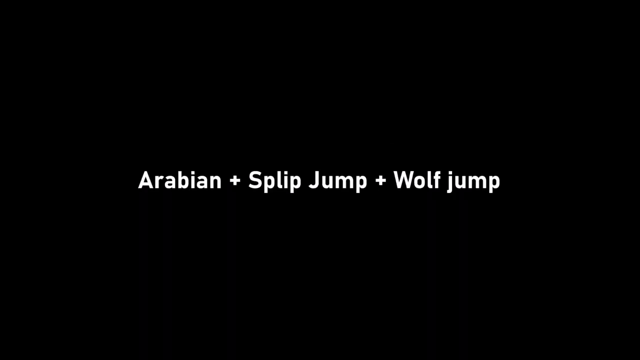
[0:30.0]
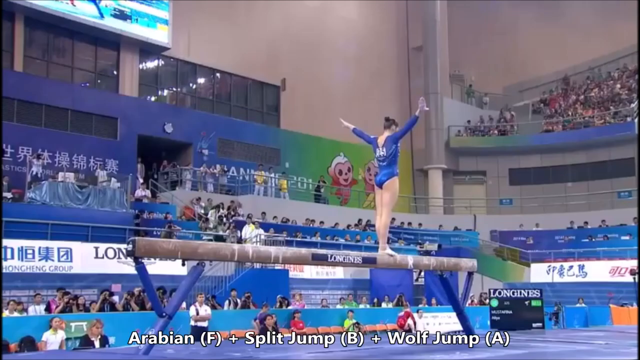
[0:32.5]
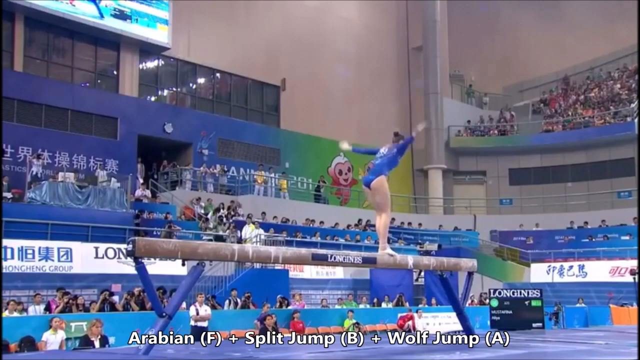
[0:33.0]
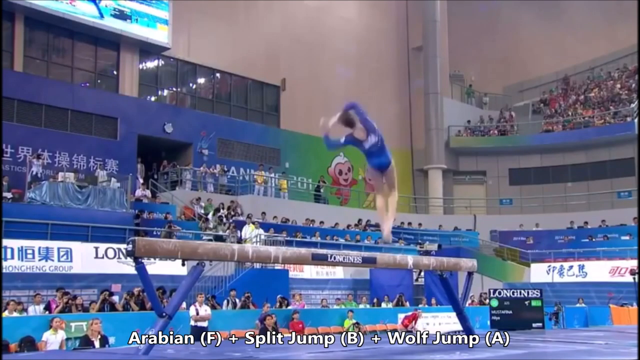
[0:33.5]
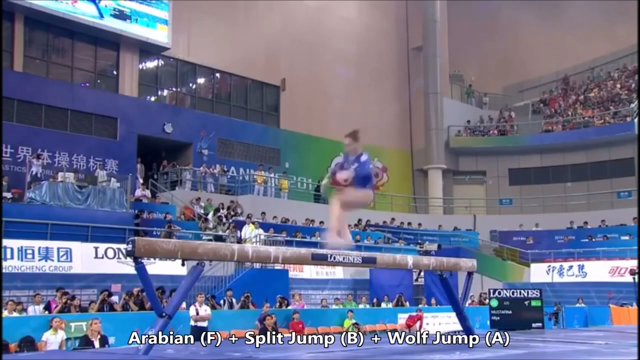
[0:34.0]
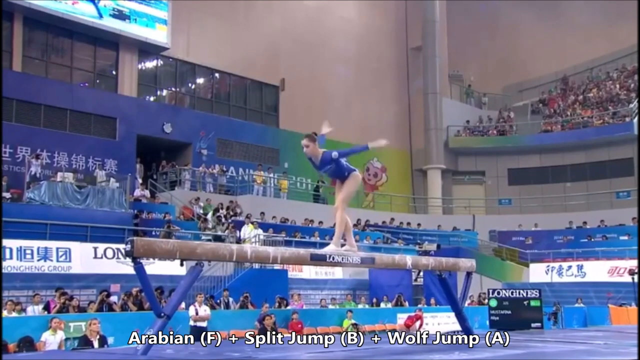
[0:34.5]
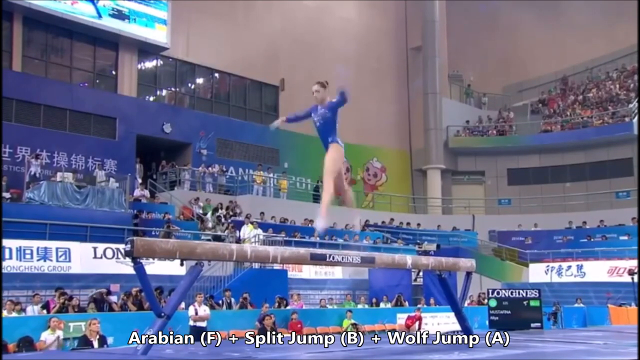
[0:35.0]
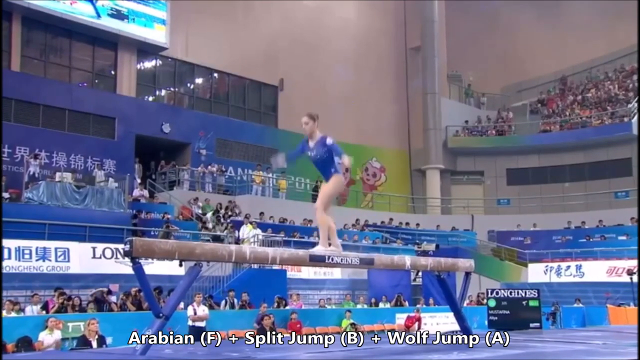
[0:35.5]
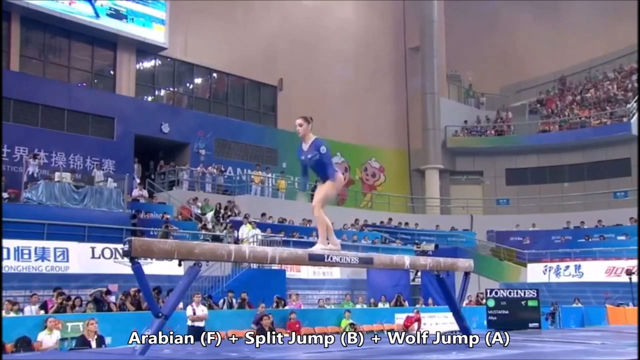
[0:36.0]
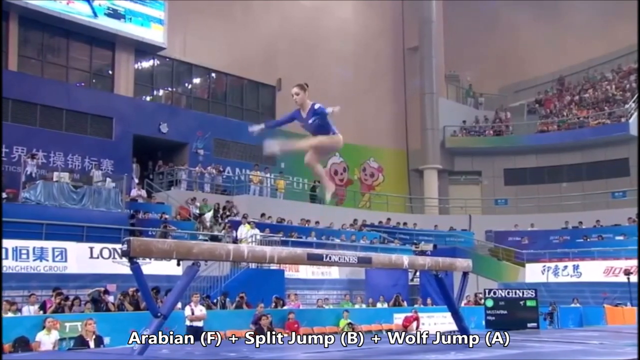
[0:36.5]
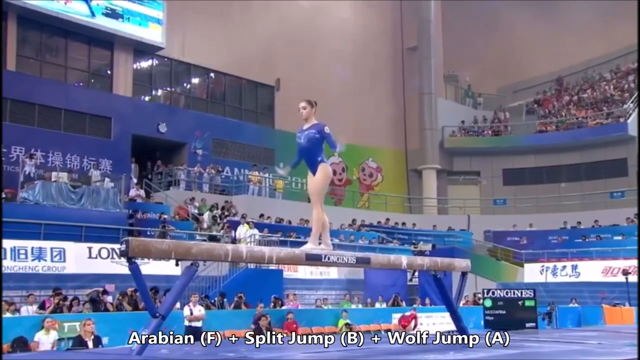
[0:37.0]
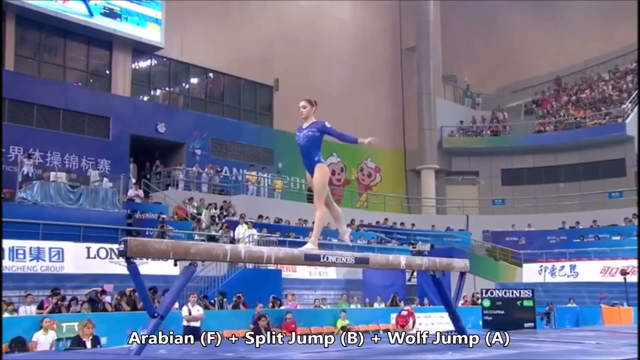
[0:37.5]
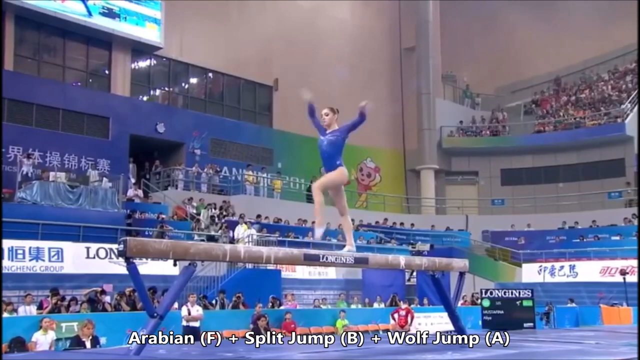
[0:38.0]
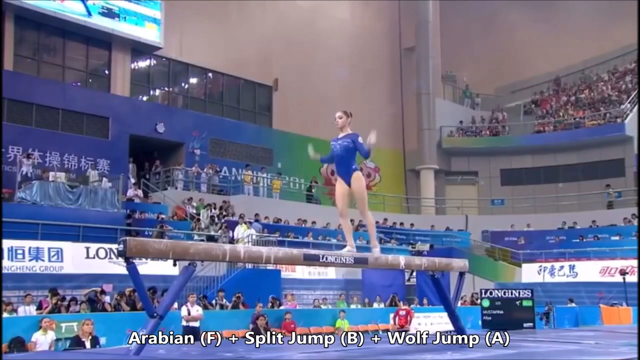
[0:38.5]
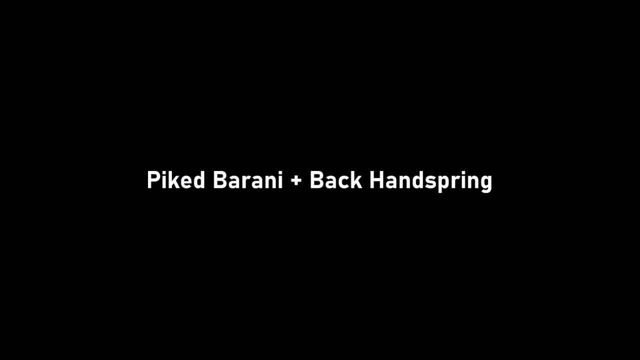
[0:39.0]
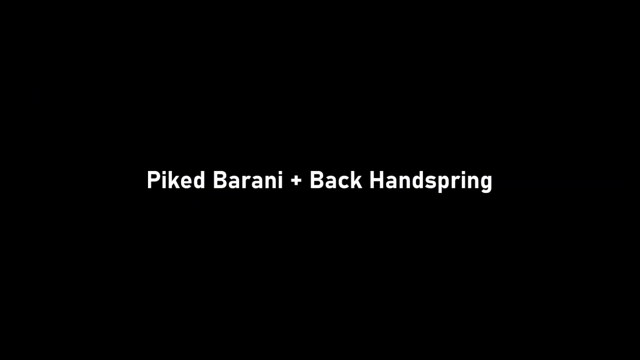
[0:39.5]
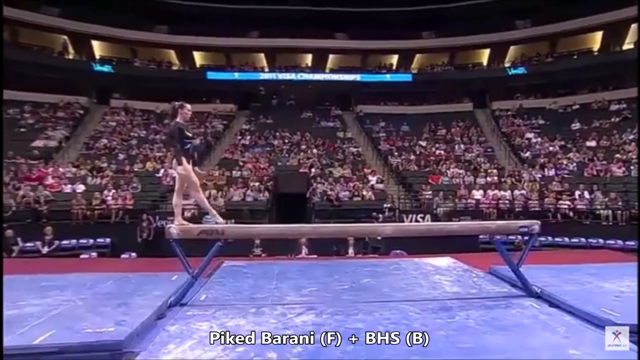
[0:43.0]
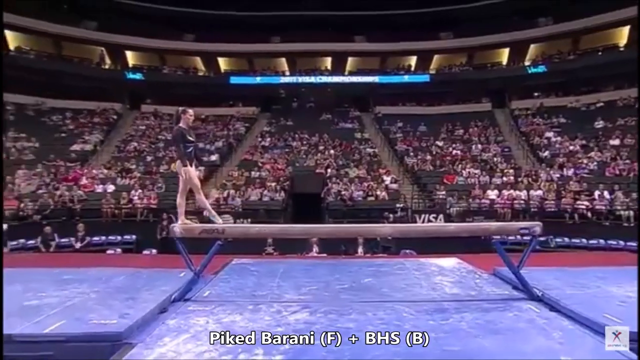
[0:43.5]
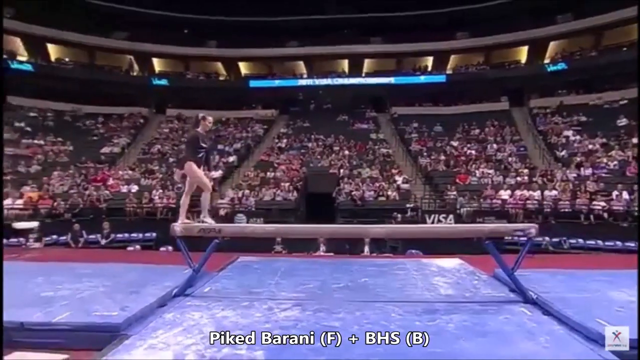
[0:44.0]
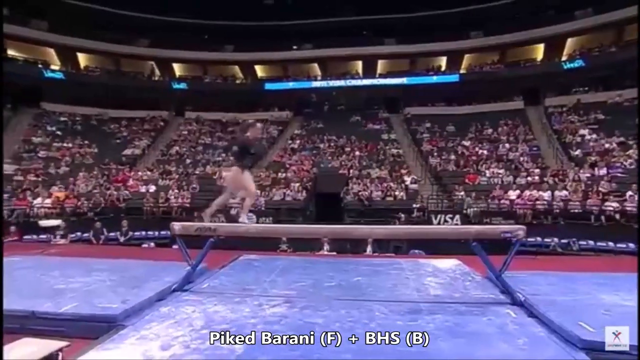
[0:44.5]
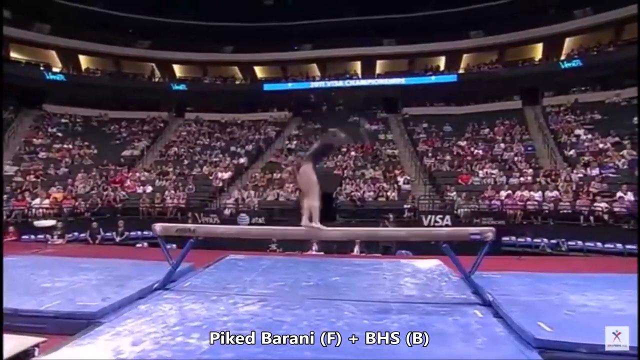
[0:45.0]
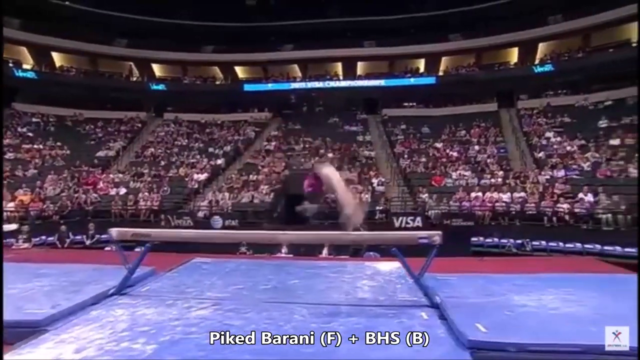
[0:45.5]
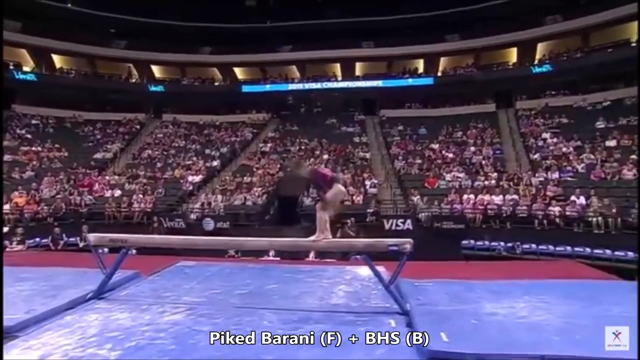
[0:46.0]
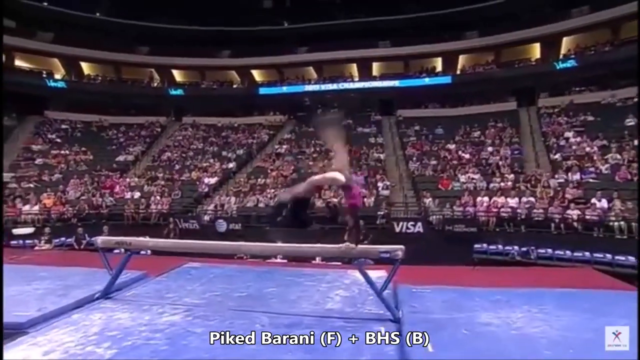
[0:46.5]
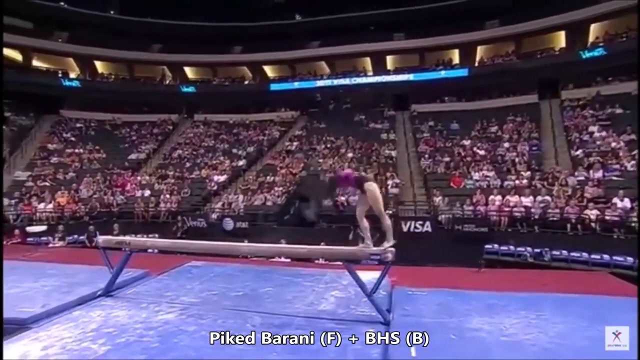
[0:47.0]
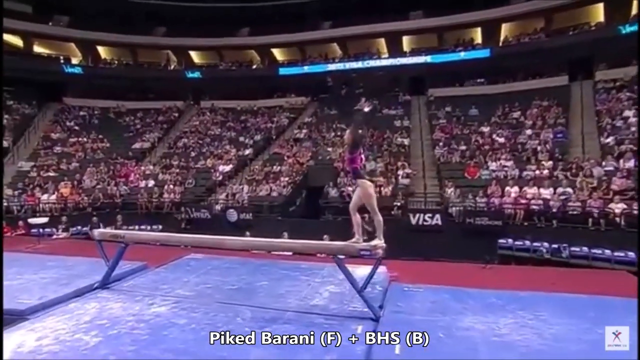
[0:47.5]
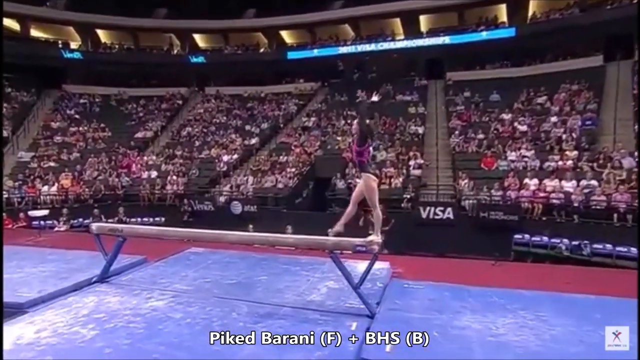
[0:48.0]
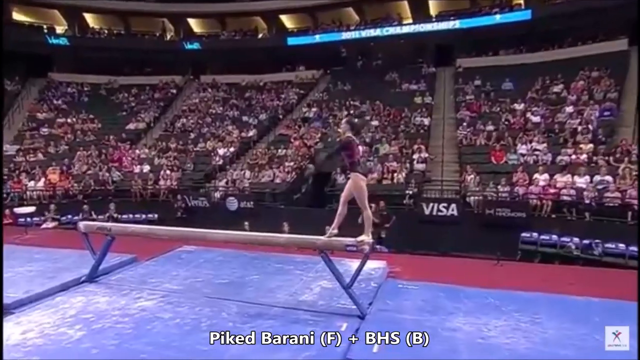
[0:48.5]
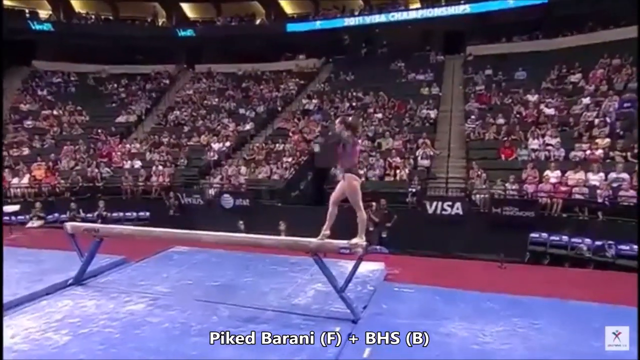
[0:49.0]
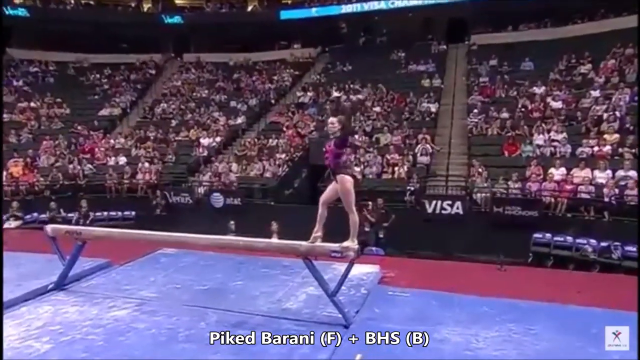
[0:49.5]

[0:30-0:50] Text on the screen reads "Arabian + split jump + wolf jump". Asian symbols appear on the walls of the arena, apparently in an Asian country. A gymnast in a blue leotard does some type of spin flip. She is doing the bars, and she walks on a beam, then flips, turns the other way, and does a split in the air. Text then reads "piked barani + back handspring" and stays up for a few seconds. Then a different event is shown: someone in a black long-sleeved leotard is on the beam, walking; she flips, and when she lands she faces the opposite direction.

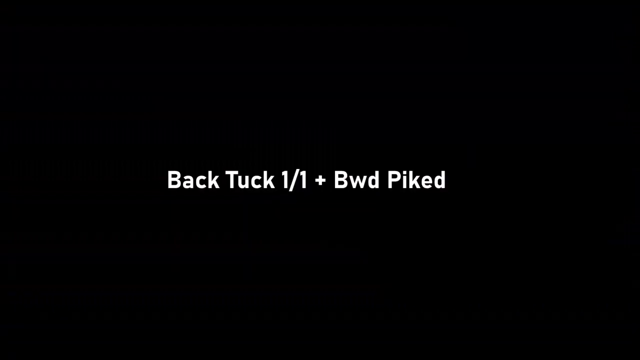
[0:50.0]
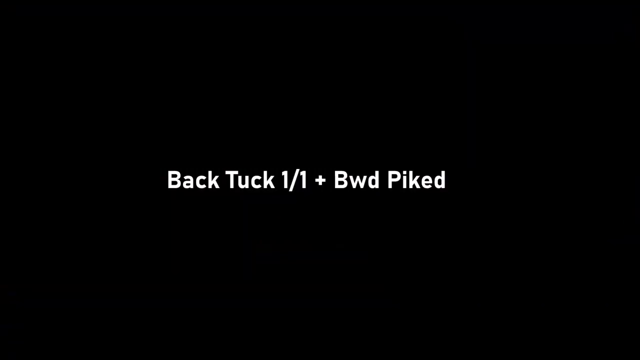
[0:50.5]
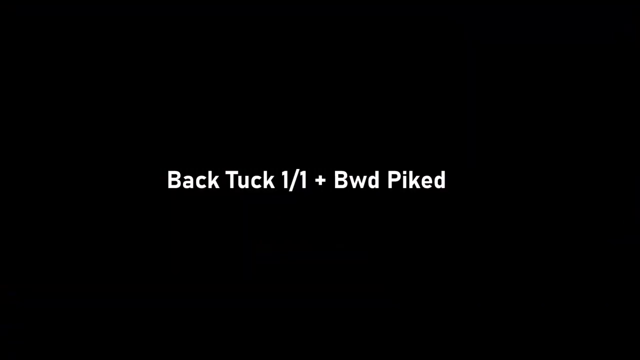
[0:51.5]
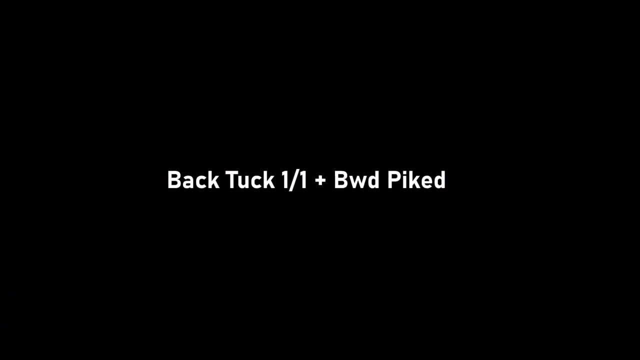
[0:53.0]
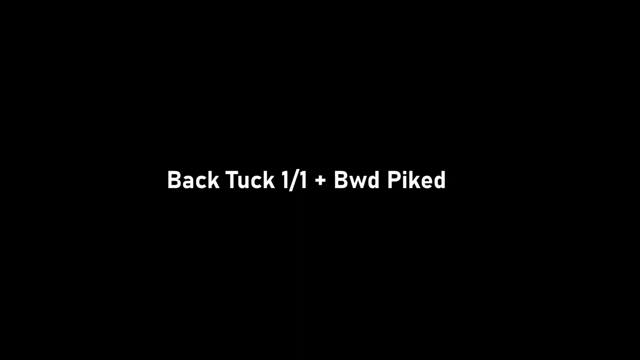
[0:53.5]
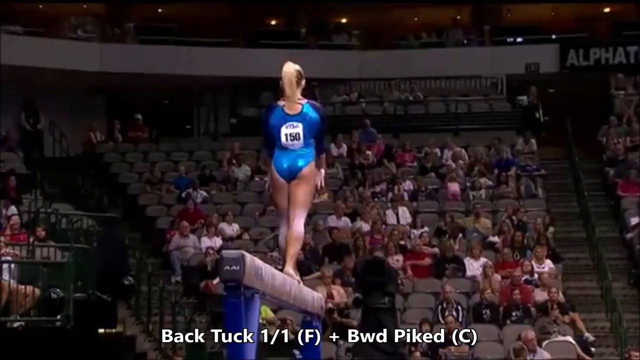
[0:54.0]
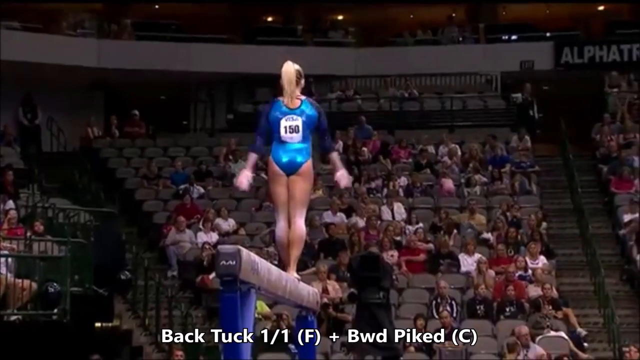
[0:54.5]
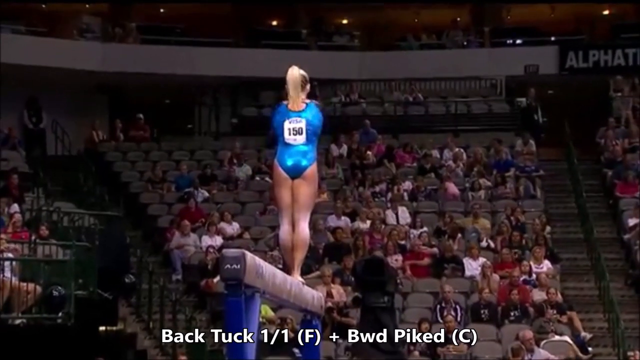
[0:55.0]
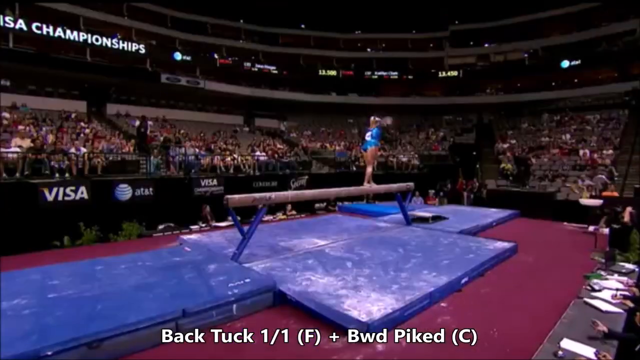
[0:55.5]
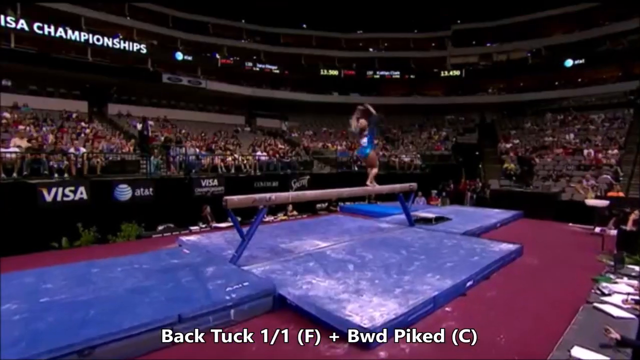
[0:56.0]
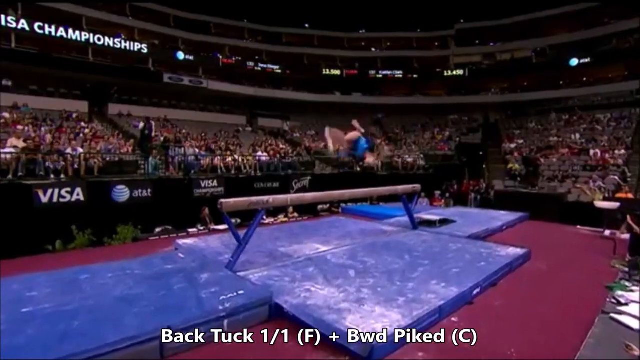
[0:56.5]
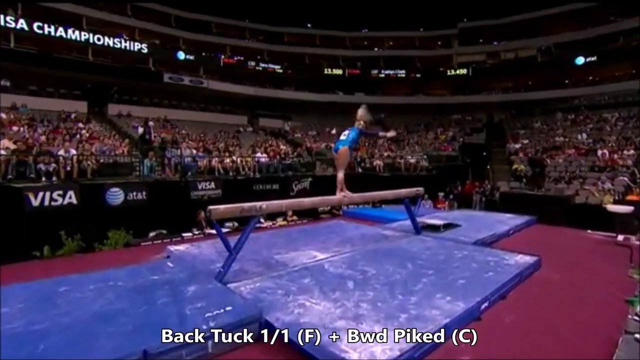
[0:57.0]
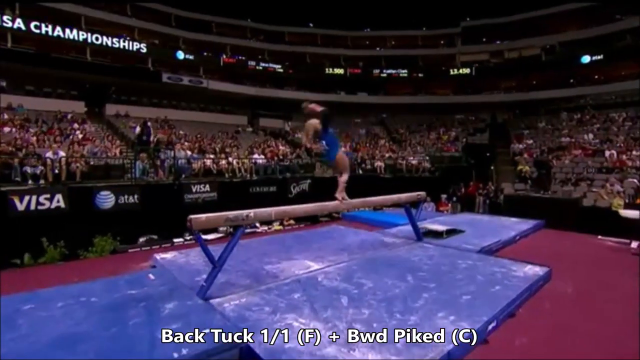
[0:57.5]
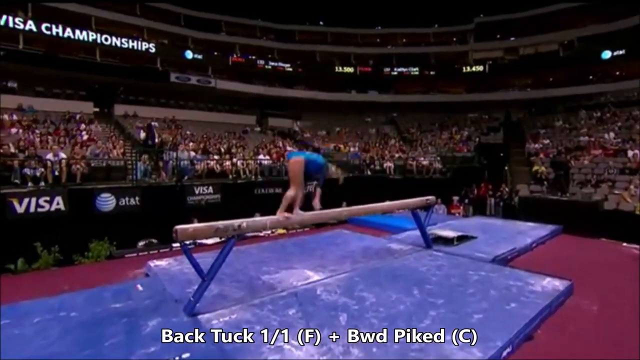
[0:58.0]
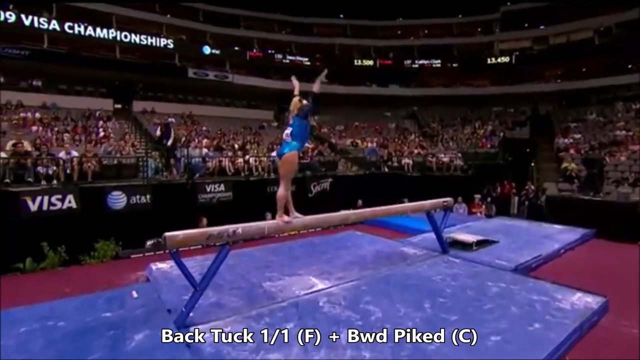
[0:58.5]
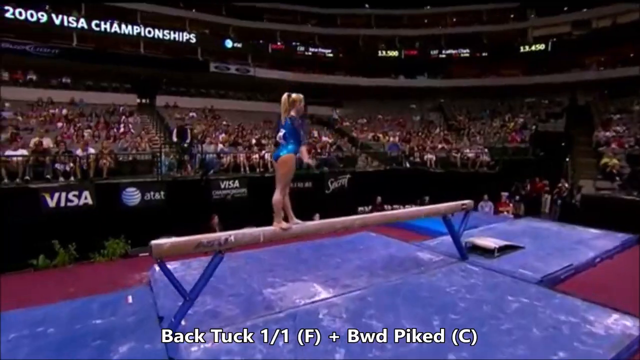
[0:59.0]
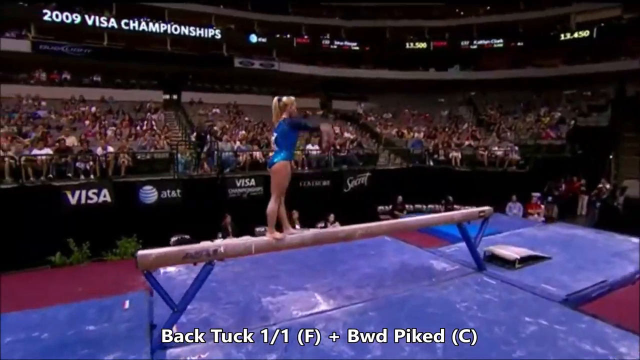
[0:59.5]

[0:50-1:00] Text appears that begins "back tuck", followed by a slash, a plus sign, a capital B and "WD". It stays up for a few seconds, then disappears. Next, a gymnast is seen at what seems to be a national event, since the arena is kind of big and, at least from the view of the audience, not full but close to it. She wears a blue leotard and a three-quarter length shirt, and her number is 150. She does a back spinner-like flip, and then another one.